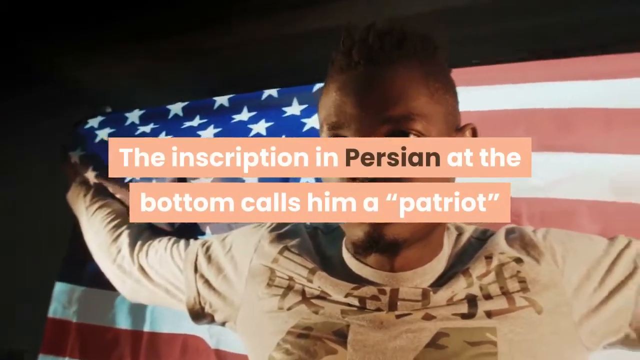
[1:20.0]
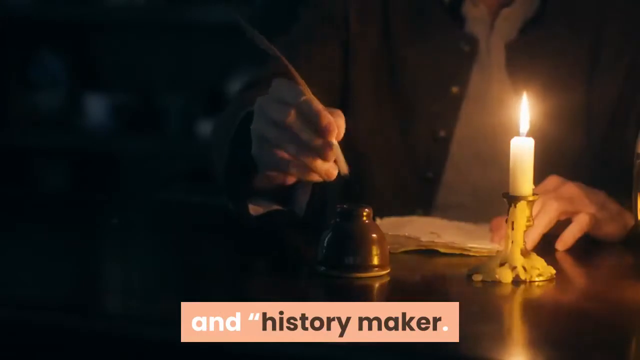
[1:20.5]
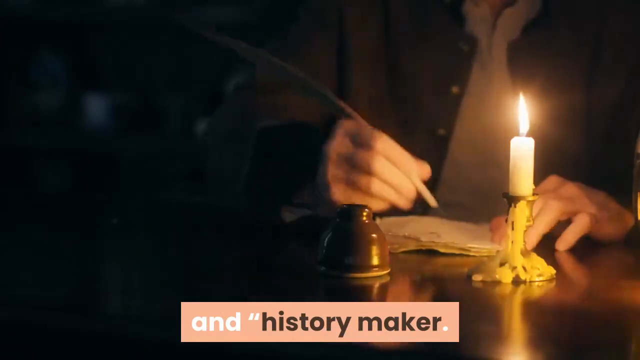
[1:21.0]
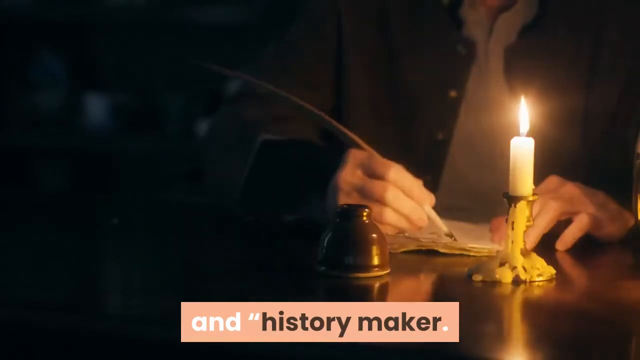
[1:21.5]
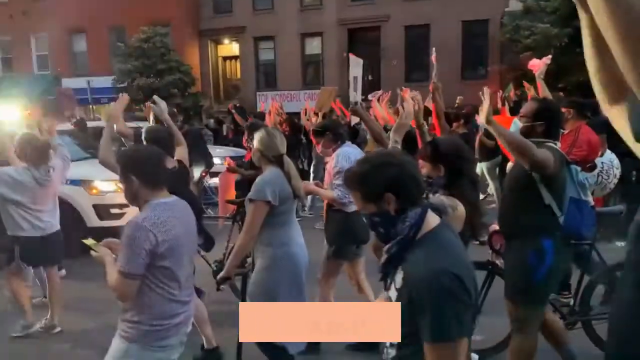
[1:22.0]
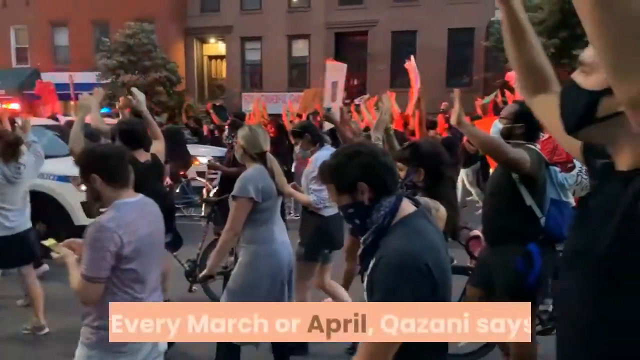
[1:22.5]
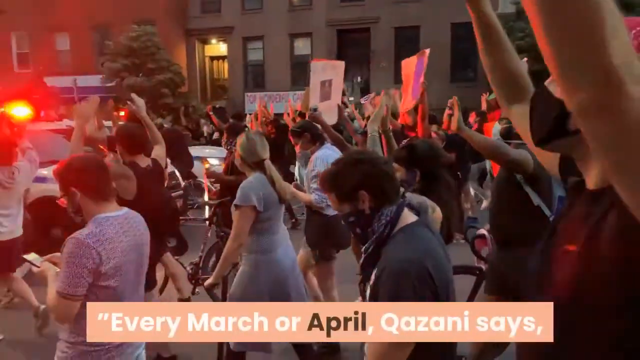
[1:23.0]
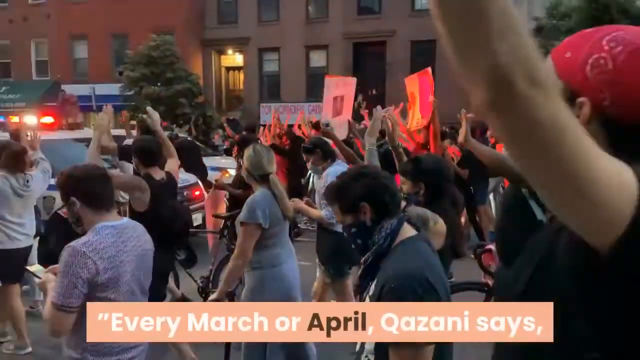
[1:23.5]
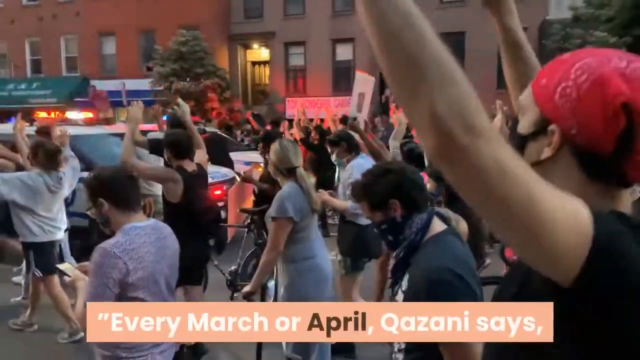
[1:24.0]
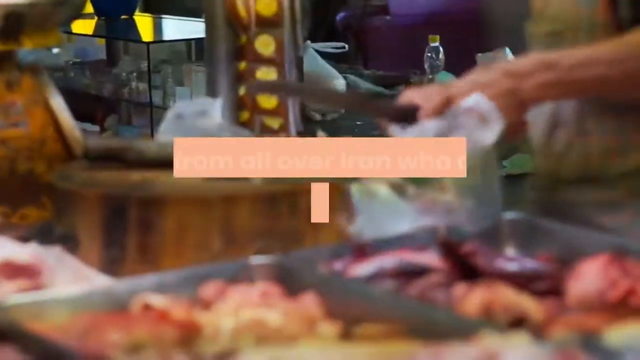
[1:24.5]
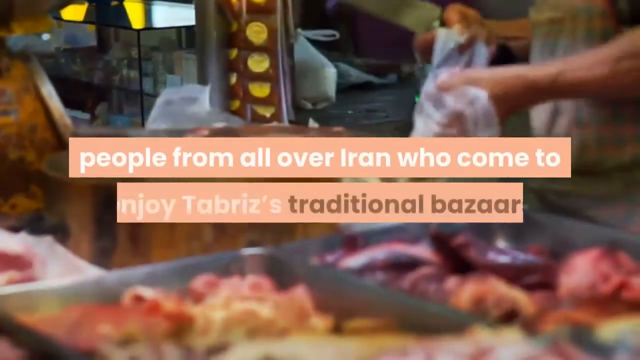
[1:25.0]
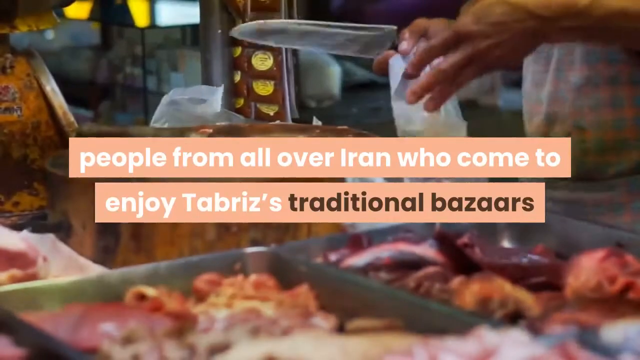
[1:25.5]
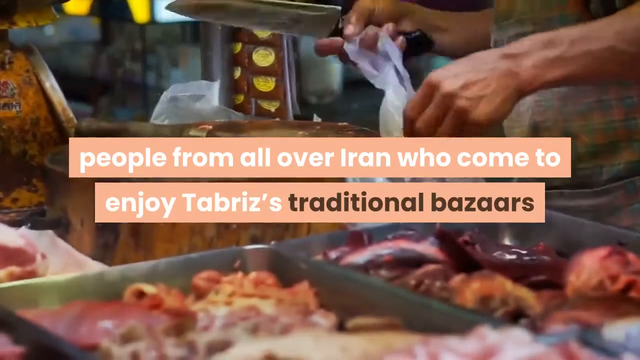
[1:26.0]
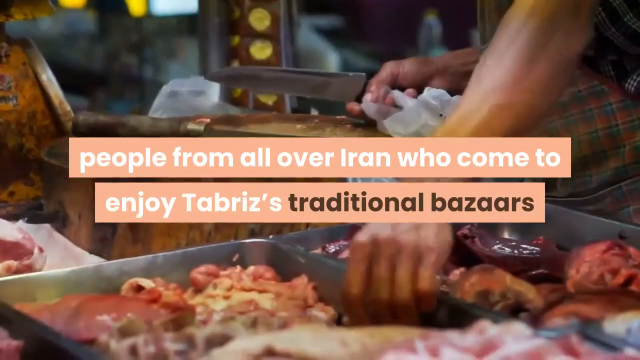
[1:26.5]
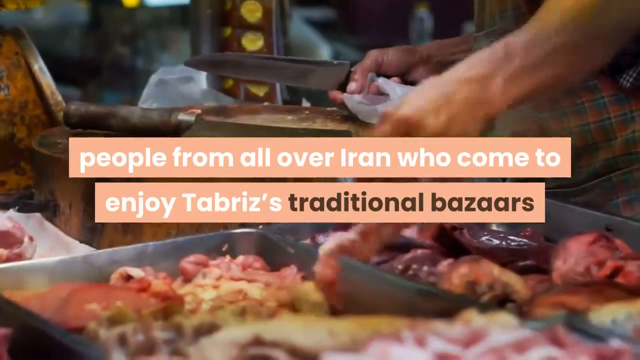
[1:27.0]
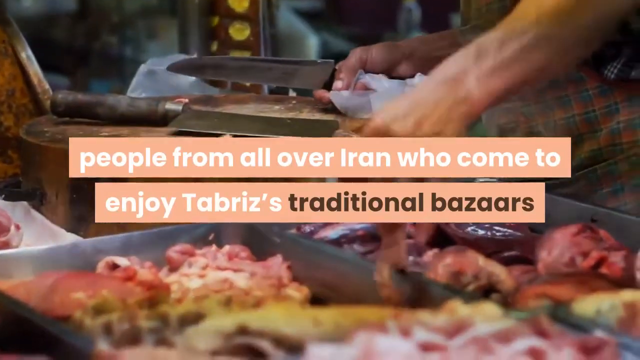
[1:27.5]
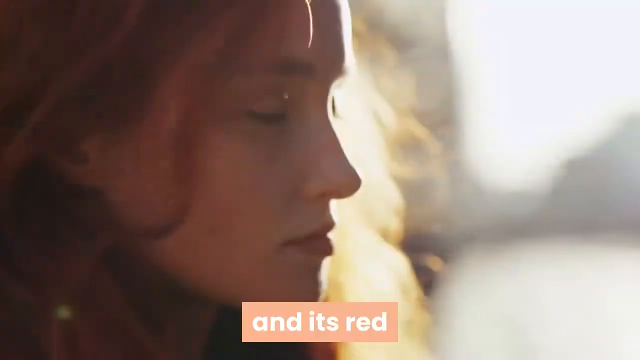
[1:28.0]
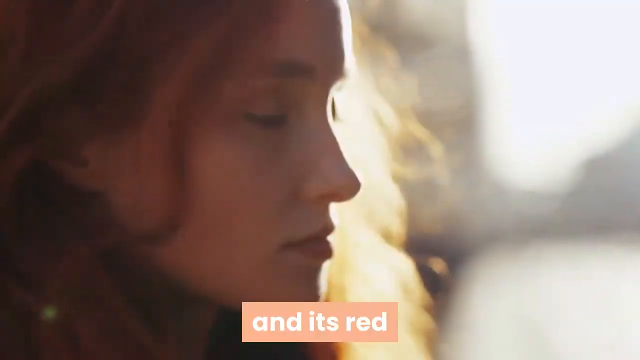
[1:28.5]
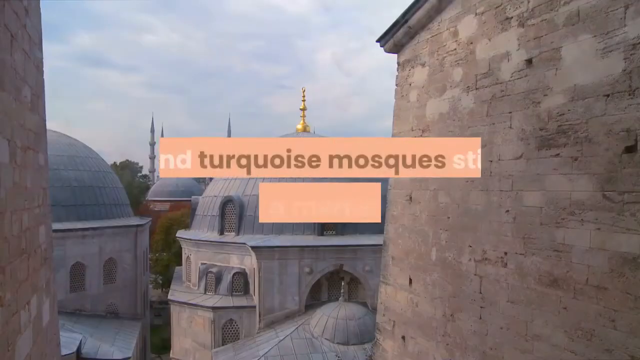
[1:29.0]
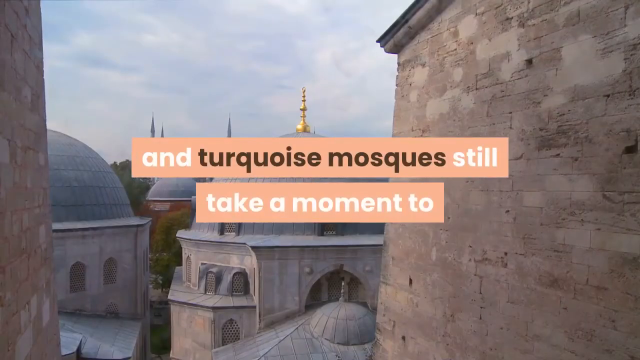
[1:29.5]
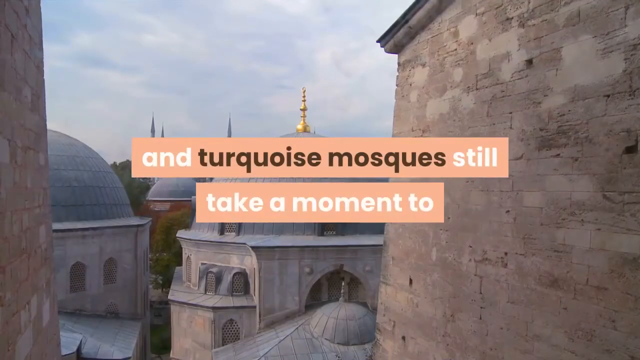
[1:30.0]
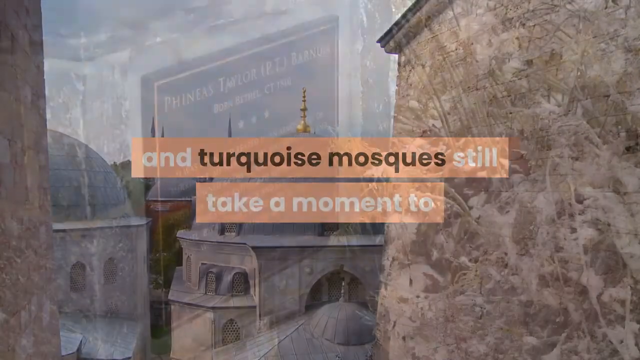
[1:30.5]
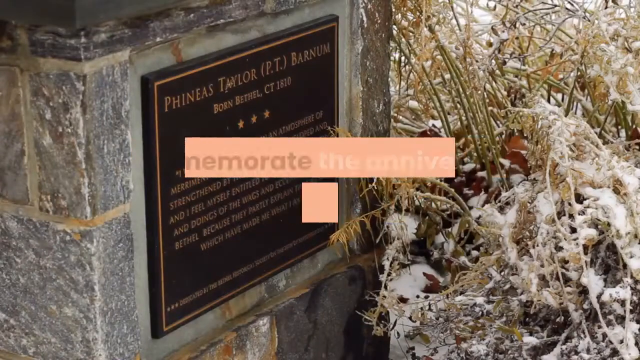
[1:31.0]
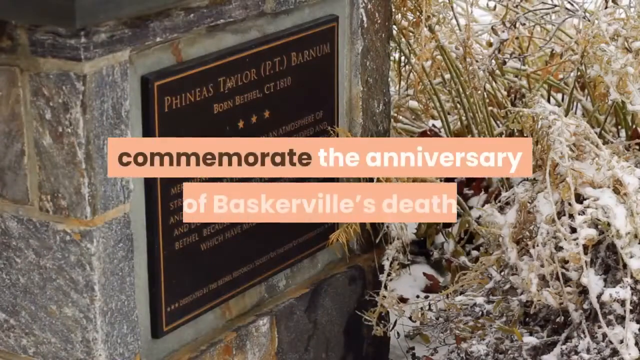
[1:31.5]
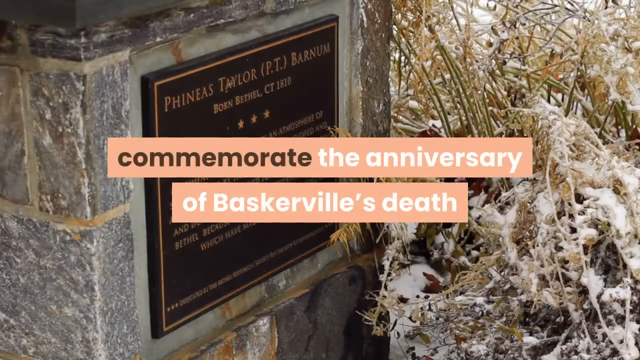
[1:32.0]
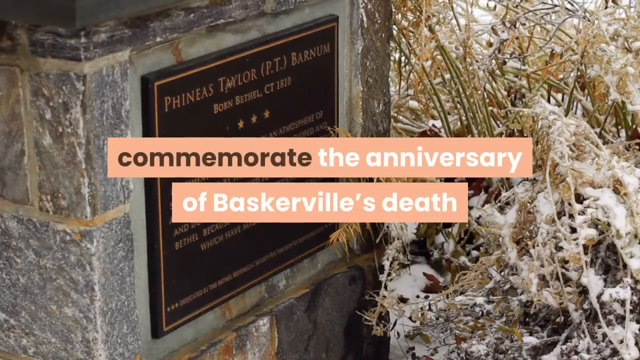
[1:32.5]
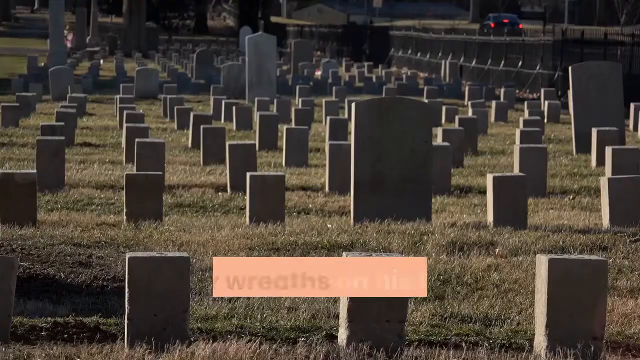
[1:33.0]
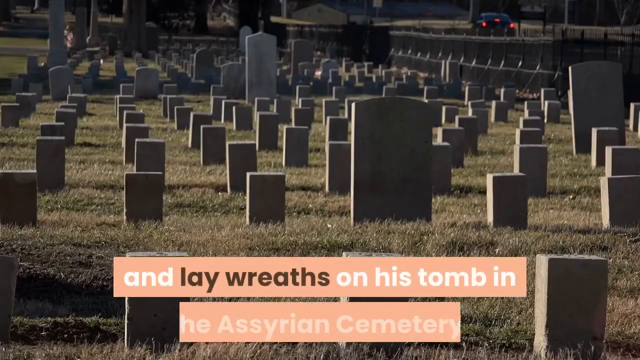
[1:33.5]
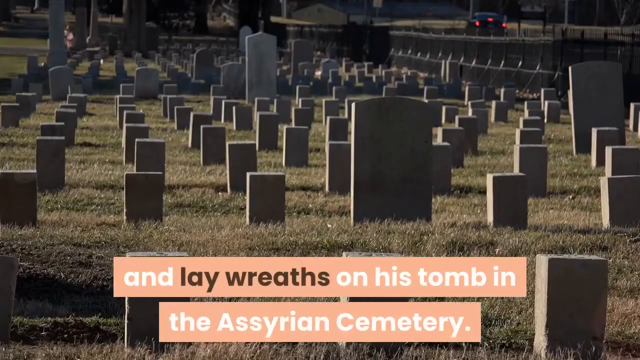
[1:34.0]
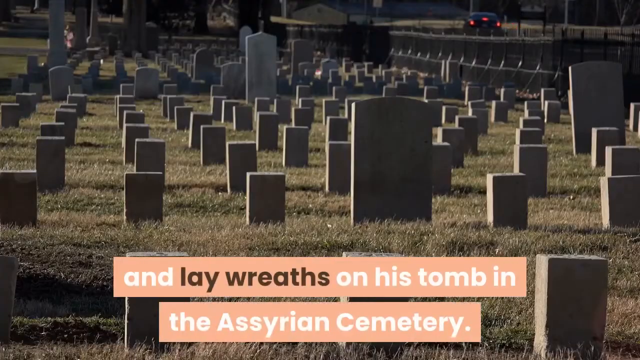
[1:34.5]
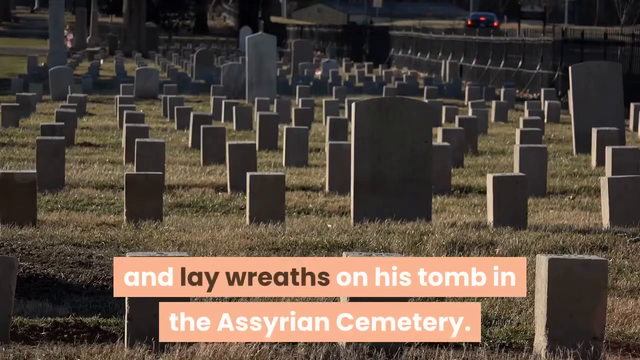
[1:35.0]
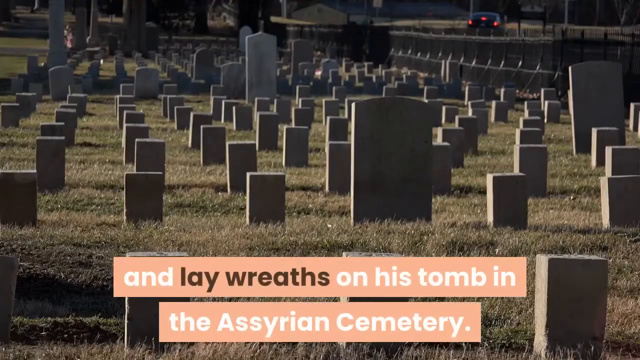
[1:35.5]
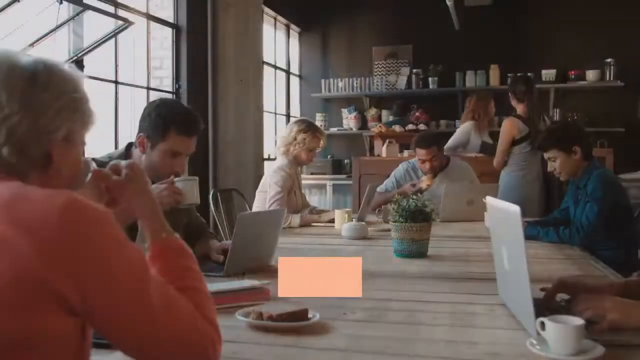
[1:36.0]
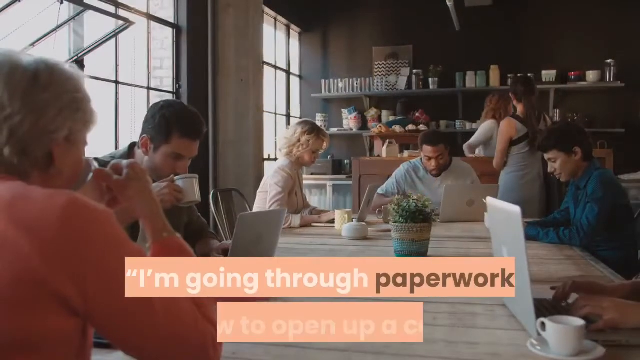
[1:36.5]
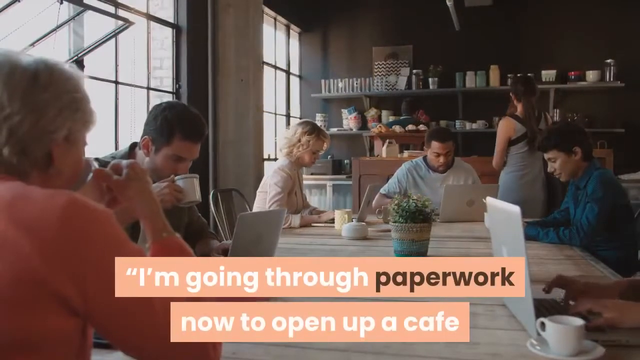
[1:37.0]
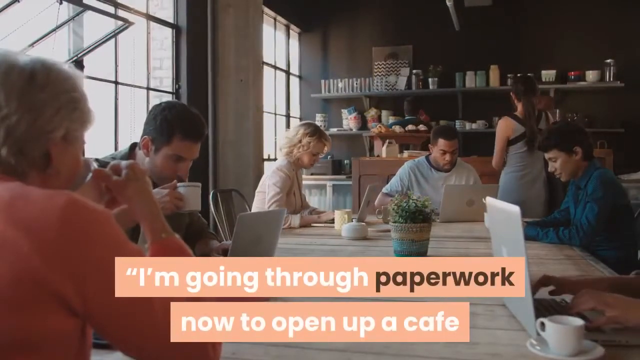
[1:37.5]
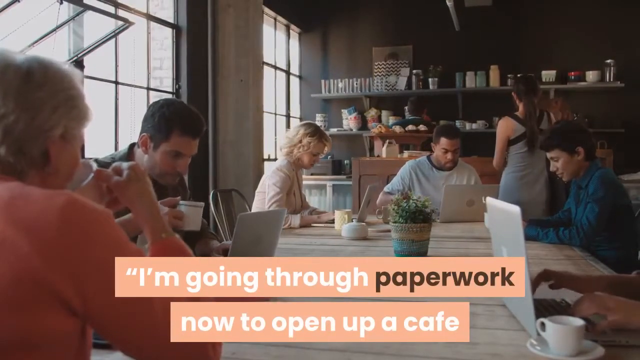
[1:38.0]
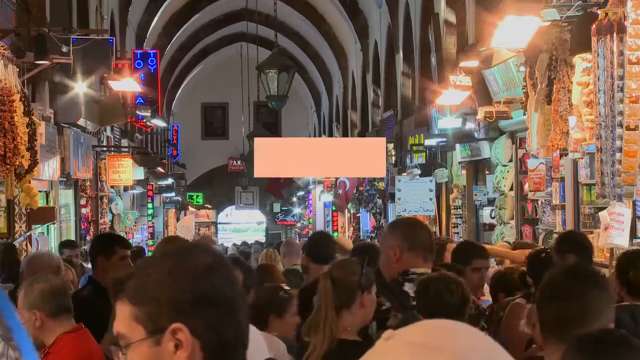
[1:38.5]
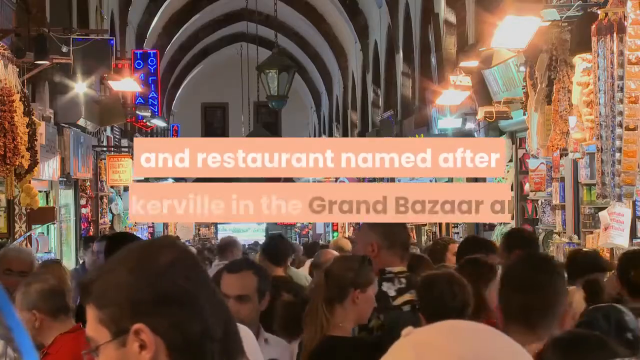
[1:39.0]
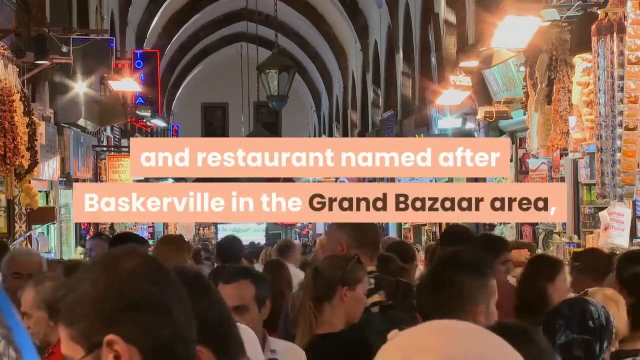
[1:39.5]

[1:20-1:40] The African American man stands with arms stretched out, holding an American flag behind him. Then a man who looks like he is from Revolutionary times dips a feather into an inkwell and writes a letter by candlelight. People march down the street holding signs, with police cars with flashing lights. Next, people at a market cut up fruits, vegetables and some meats. A woman stands in the sun with her eyes closed. Close-up views of an Iranian city look at the rooftops of buildings. The base of the statue dedicated to Baskerville is shown with a plaque on the bottom. A cemetery has rows of tombstones and neatly cut grass. In a restaurant, people sit around a table with laptops in front of them and a barista stands at a counter. Then a nighttime view shows a busy street with lots of lights and people milling around, going in and out of shops. The overlaid text calls Baskerville a history maker and says that every March or April people from all over Iran come to enjoy a traditional bazaar, visit Baskerville's statue and lay wreaths on his grave, and that the person making the video is doing paperwork to open a cafe named after Baskerville.